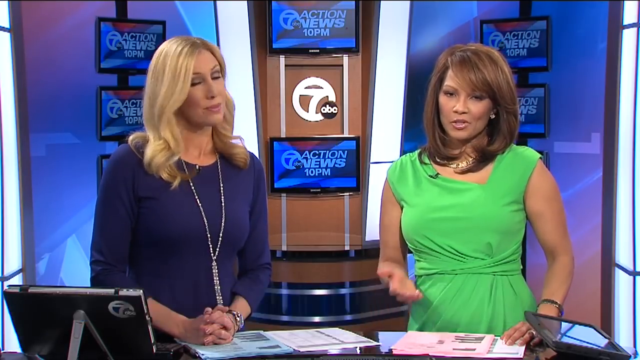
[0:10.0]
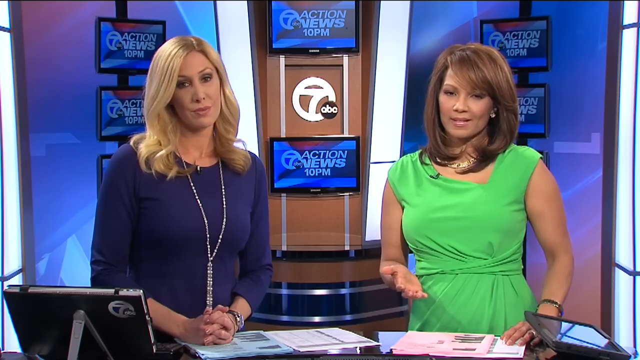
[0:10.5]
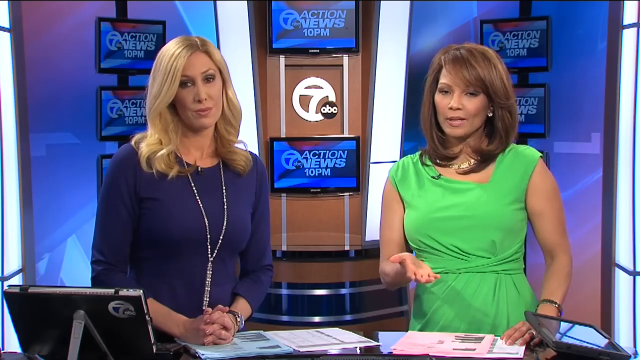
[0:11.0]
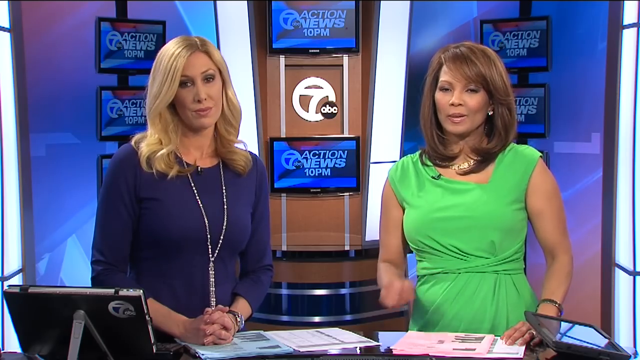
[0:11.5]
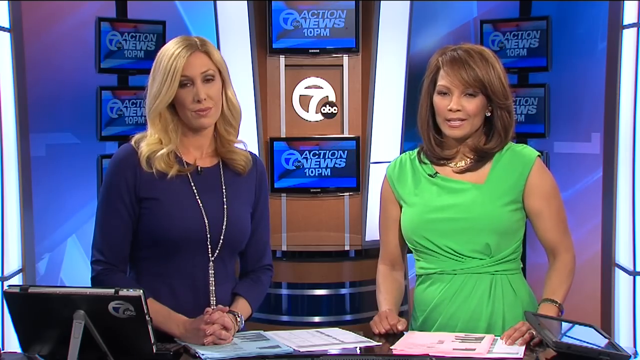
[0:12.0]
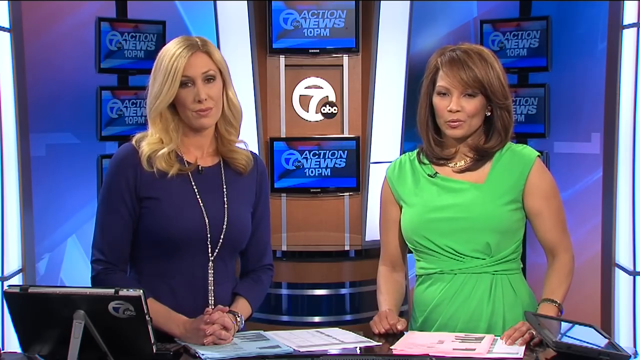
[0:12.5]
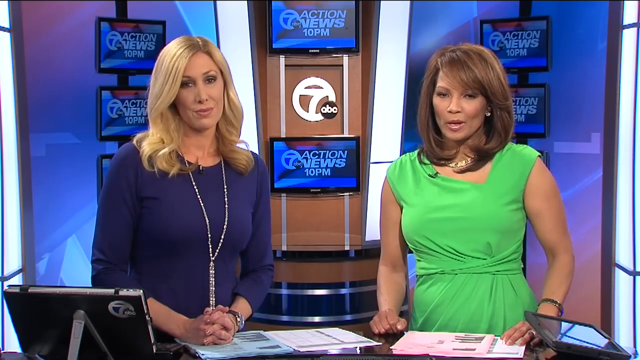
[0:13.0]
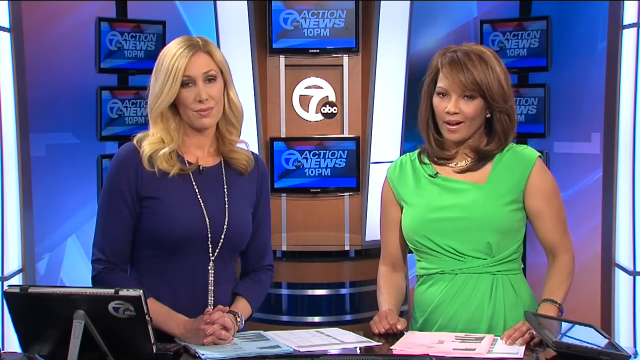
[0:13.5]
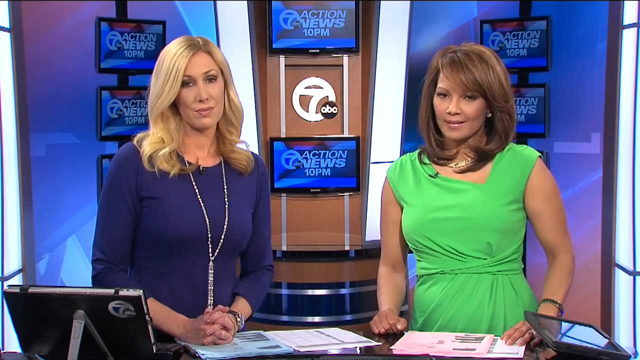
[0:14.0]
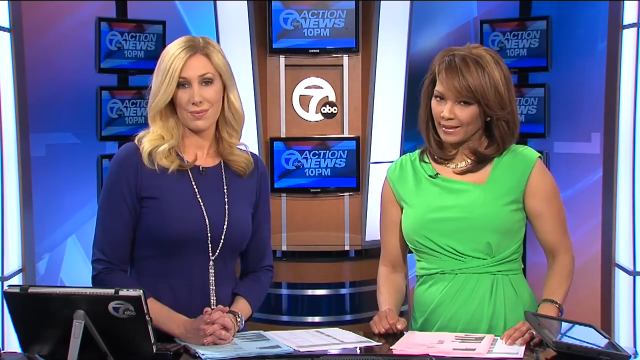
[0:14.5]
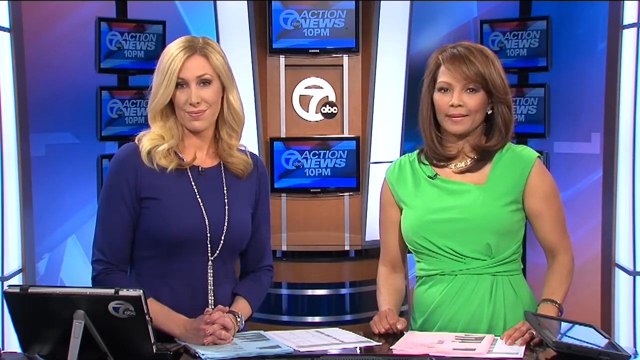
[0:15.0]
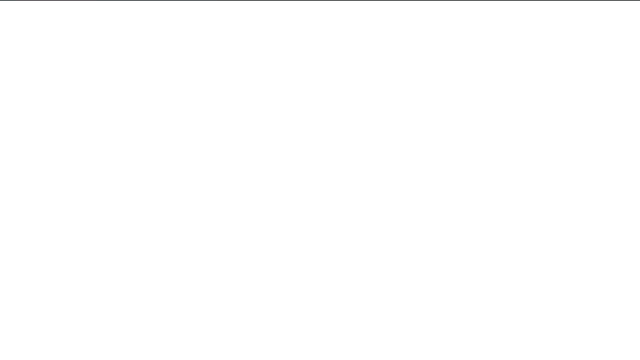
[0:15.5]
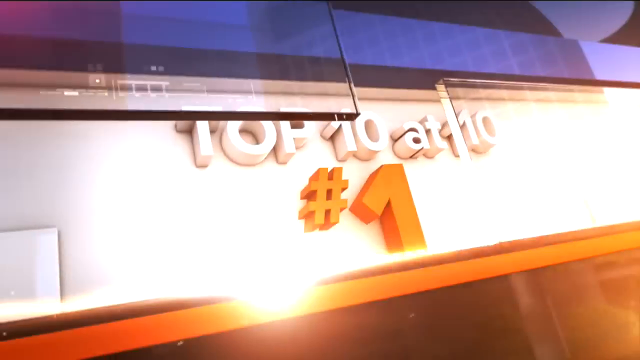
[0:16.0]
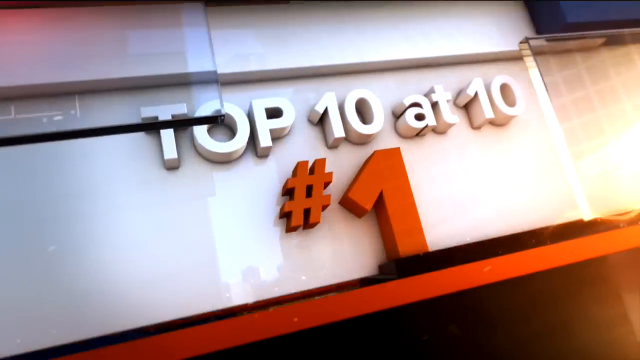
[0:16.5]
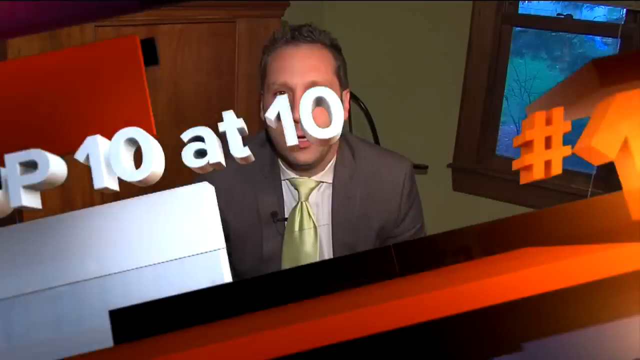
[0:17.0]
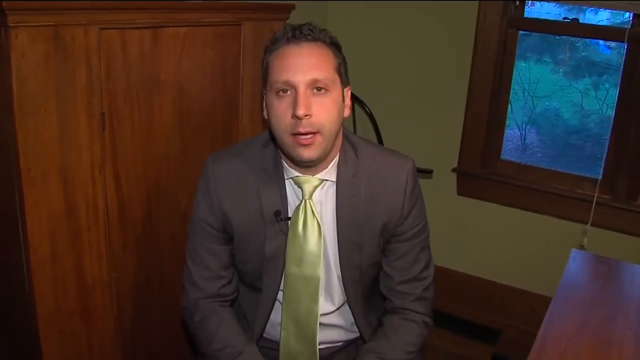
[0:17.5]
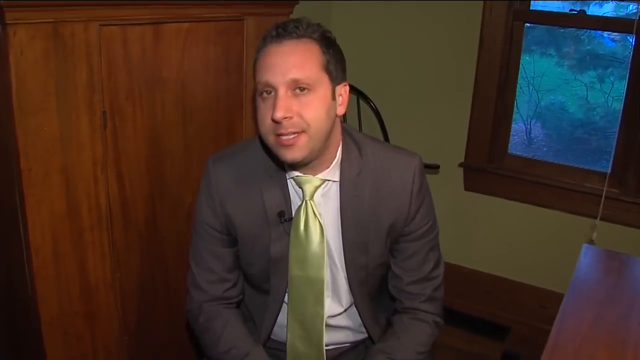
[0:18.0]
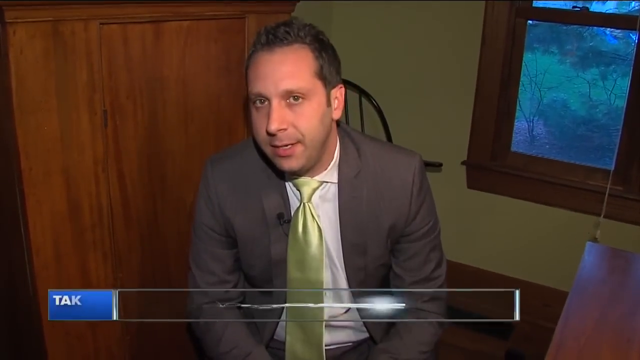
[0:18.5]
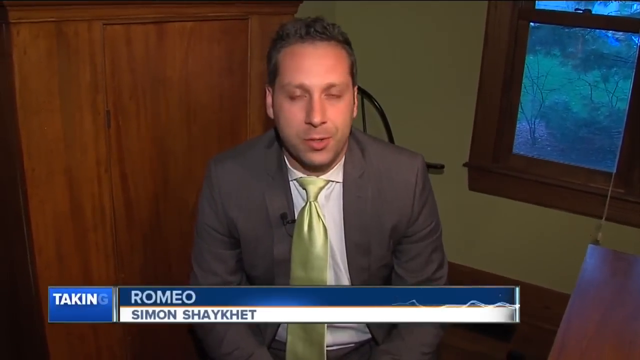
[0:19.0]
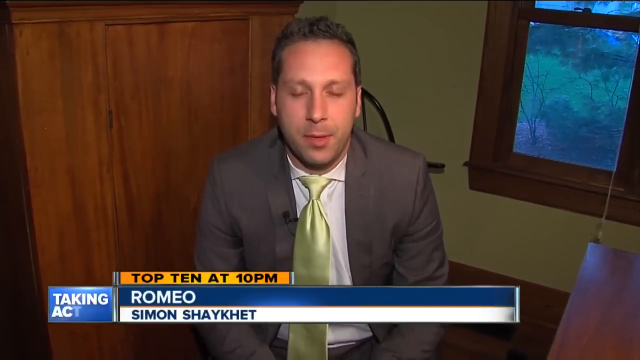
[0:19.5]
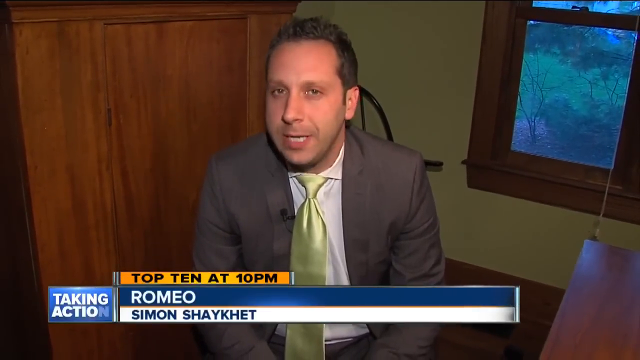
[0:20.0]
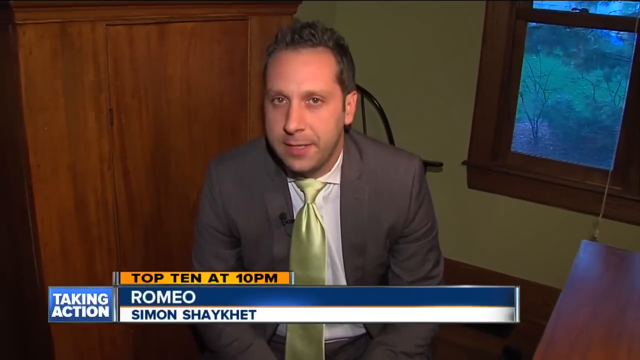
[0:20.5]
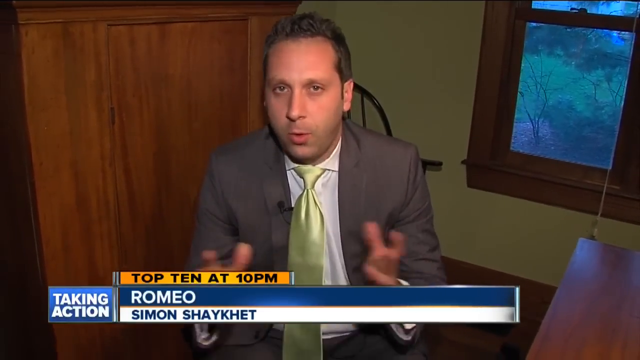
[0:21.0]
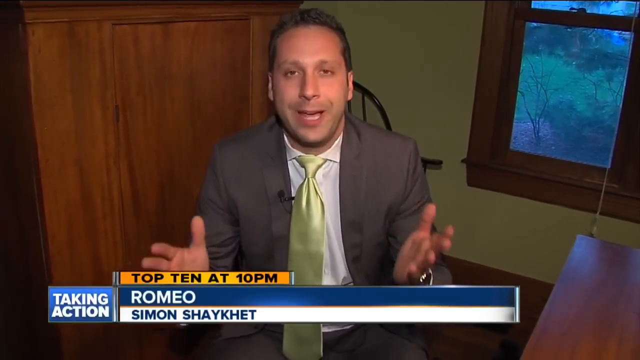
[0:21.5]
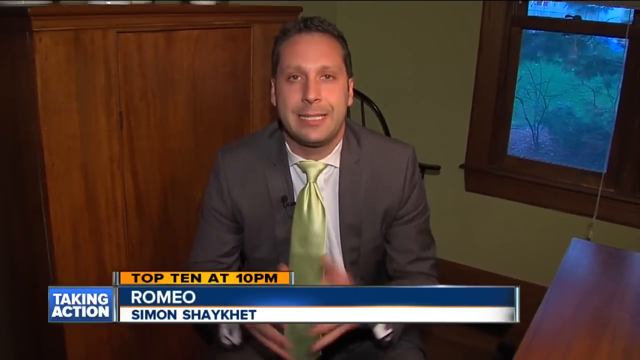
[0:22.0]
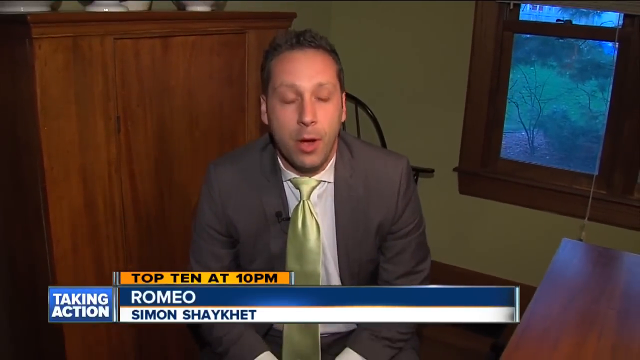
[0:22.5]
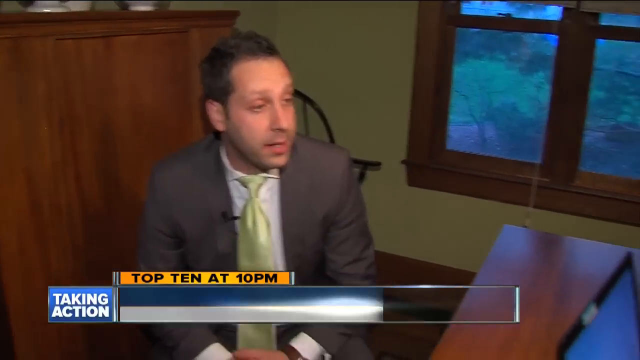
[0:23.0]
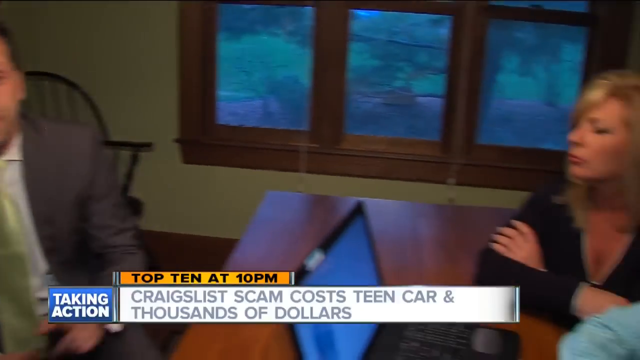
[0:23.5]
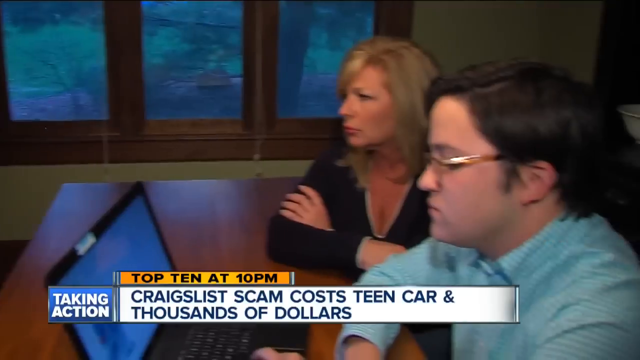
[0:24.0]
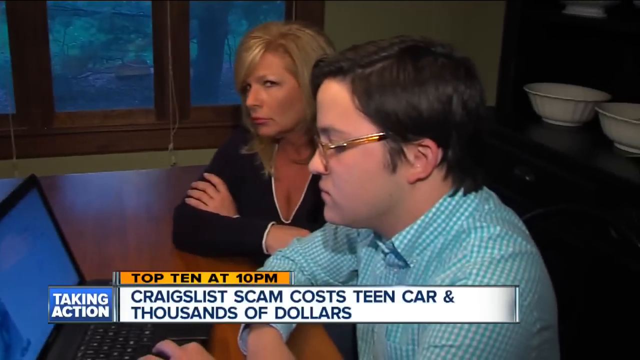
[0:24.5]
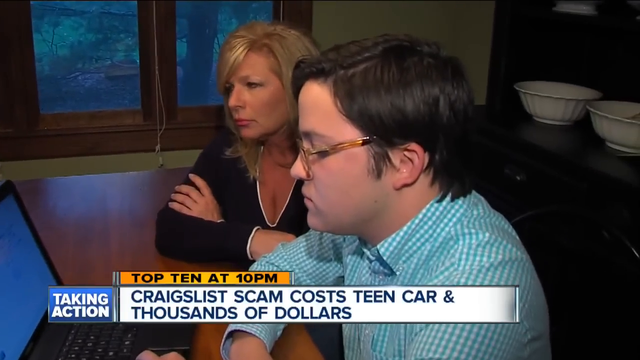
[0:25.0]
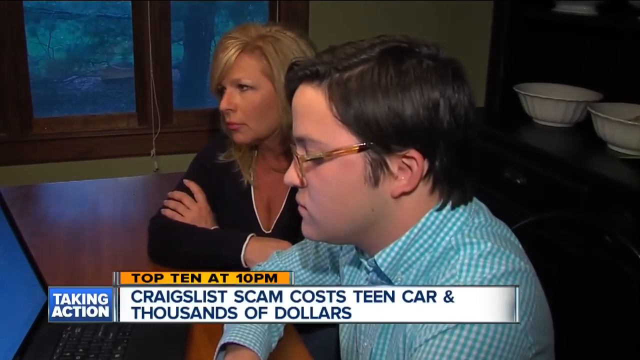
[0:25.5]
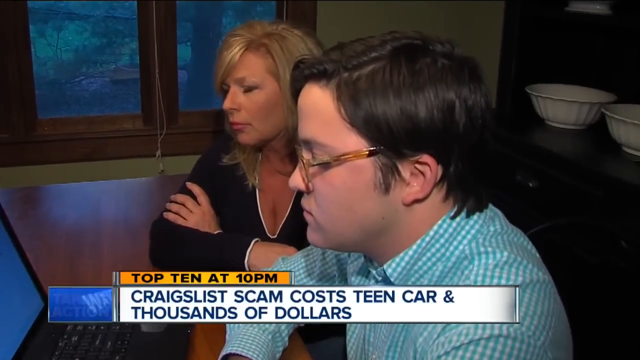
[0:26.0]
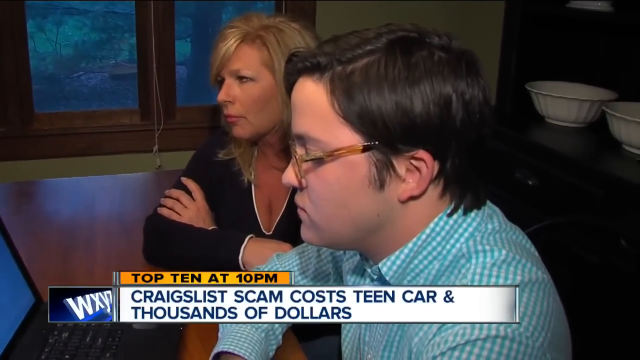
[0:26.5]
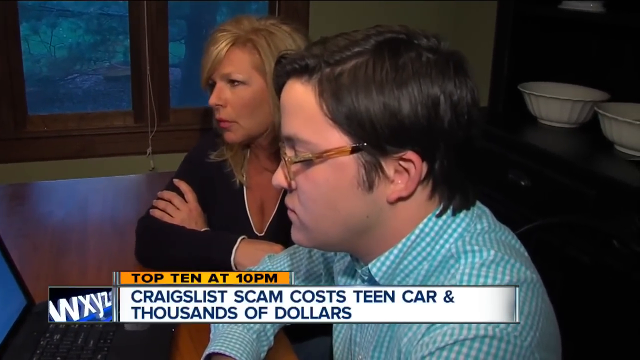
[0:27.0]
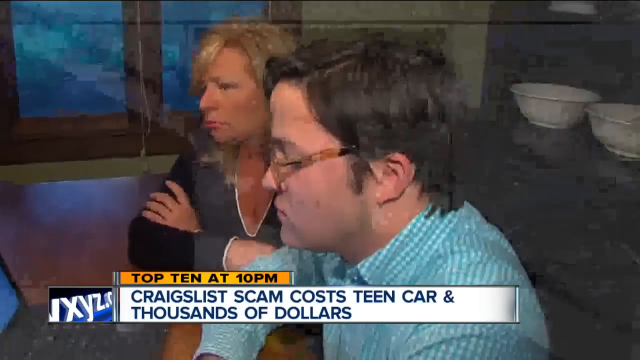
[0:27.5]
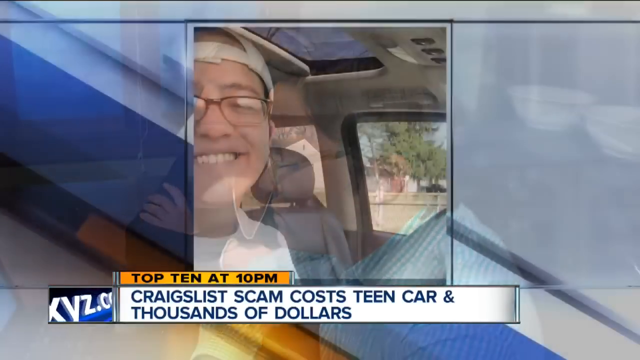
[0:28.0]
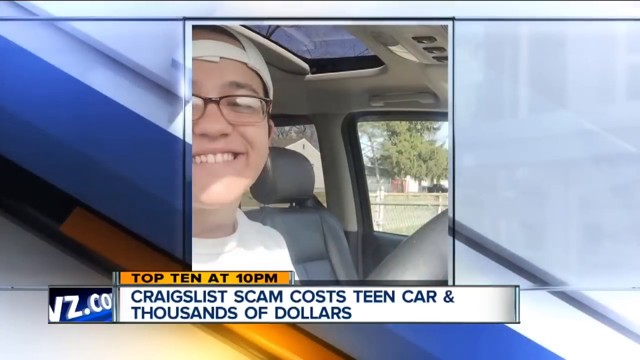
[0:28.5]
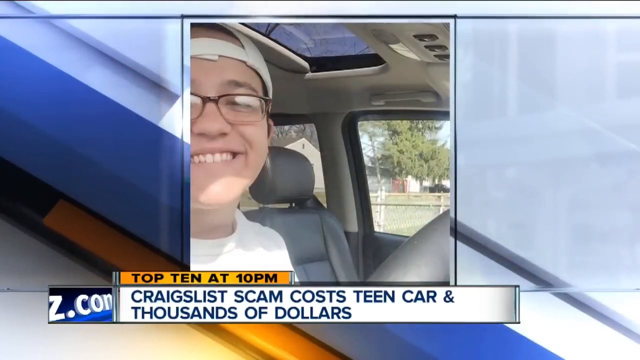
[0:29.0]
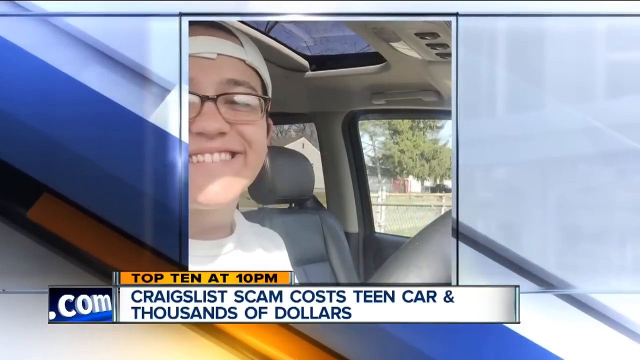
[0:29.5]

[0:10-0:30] The two female anchors stand in front of a green screen showing images of TVs and some digital designs. One wears a purple dress and a necklace that ends just below her breast and continues in two strings down around her belly button; her hair is down, a microphone piece is right above her chest, and she wears jewelry on her wrist. The other anchor wears a dress that ties right under her bosom and is pleated along her stomach, along with a gold necklace and jewelry. A digital transition image reads "top 10 at 10 number one." A male news anchor named Simon Shakey appears with "Romeo" on screen; he looks to be talking in a room next to a window, with a lot of wood in the room. The scene switches to two people sitting at a table, apparently a teen and his mom being interviewed, with the text "Craigslist scam cost teen car and thousands of dollars." The teen looks forlorn and sad. Then an image shows him in a car, smiling and looking very happy.